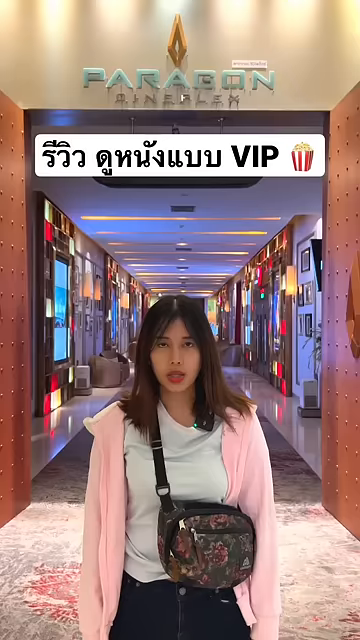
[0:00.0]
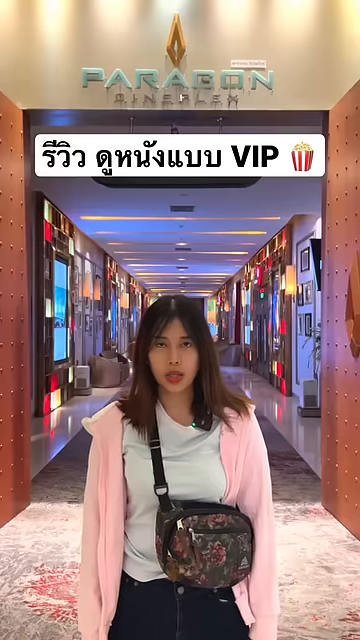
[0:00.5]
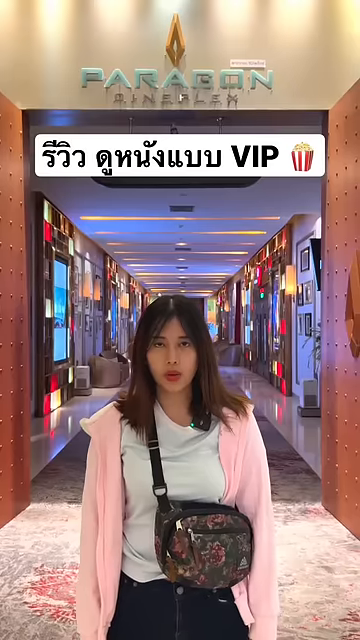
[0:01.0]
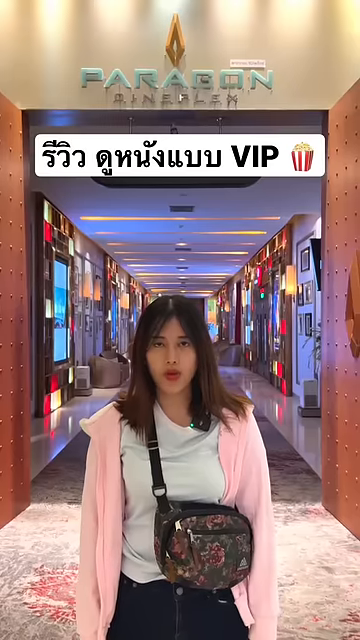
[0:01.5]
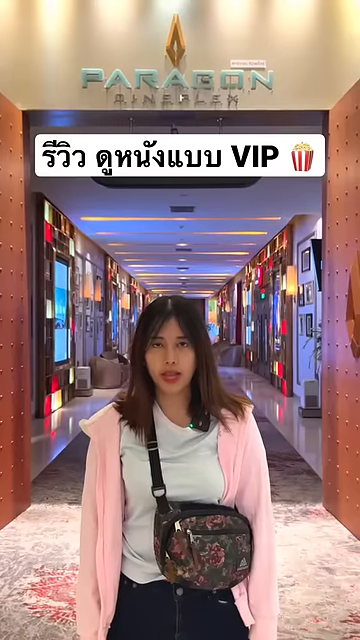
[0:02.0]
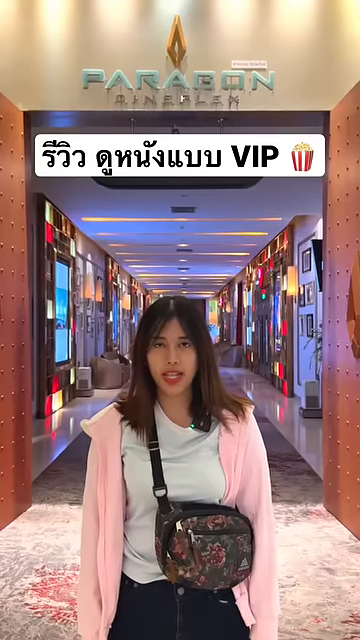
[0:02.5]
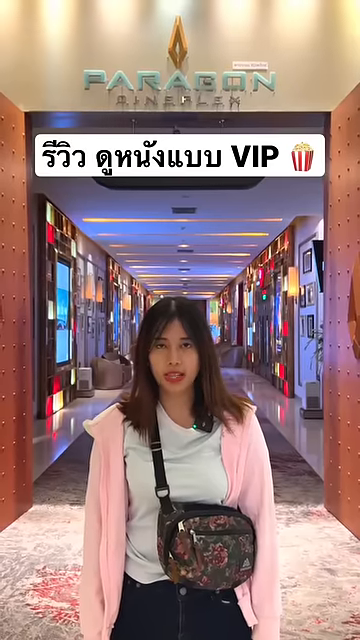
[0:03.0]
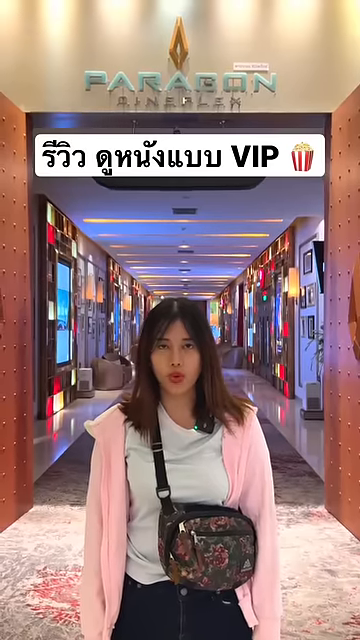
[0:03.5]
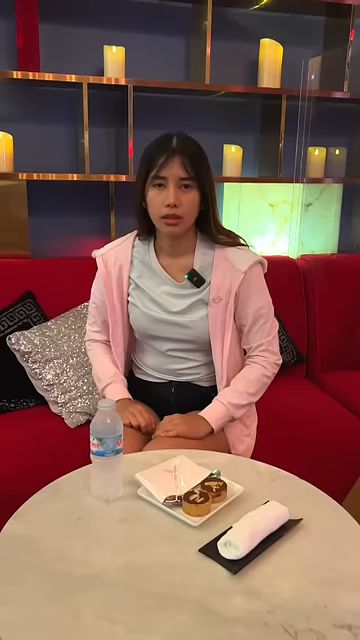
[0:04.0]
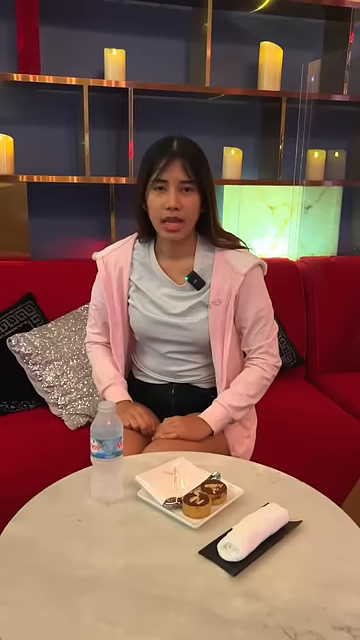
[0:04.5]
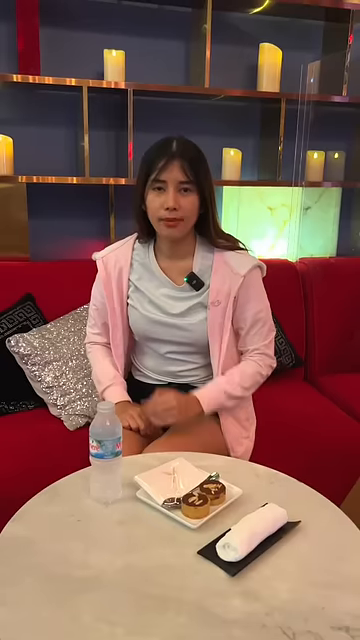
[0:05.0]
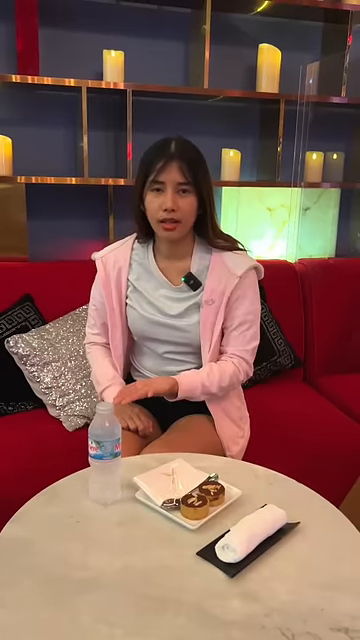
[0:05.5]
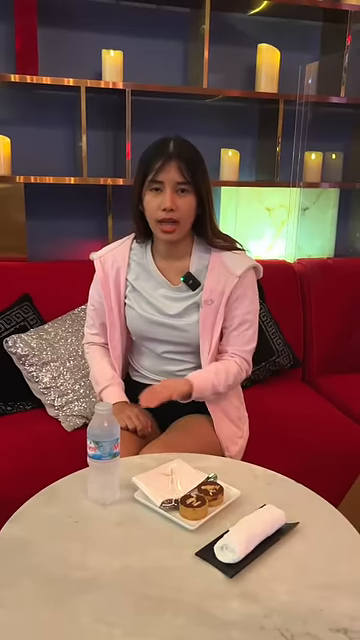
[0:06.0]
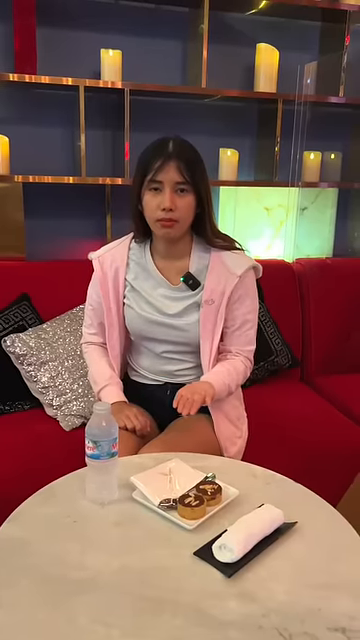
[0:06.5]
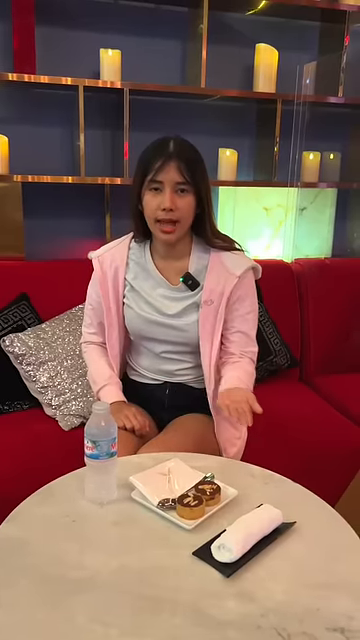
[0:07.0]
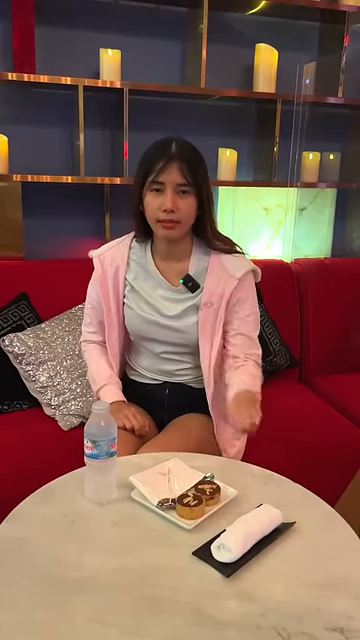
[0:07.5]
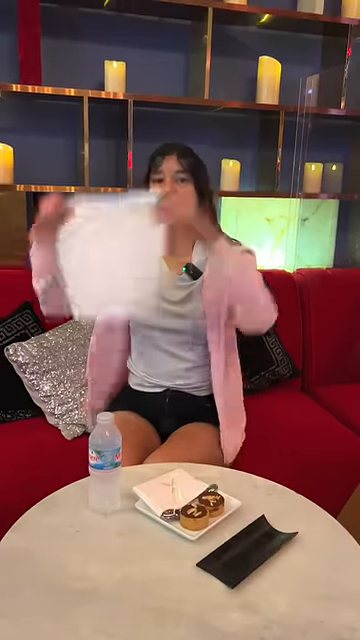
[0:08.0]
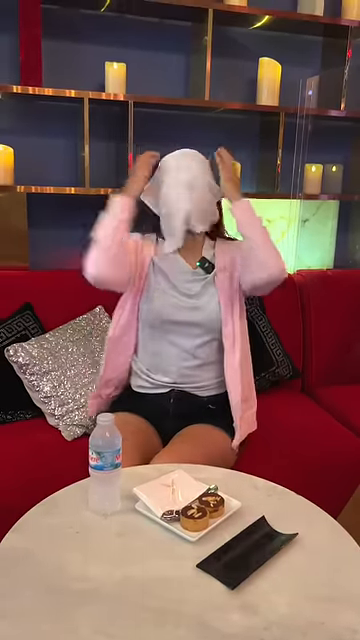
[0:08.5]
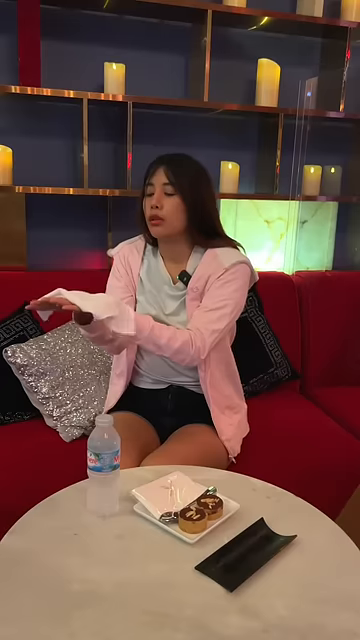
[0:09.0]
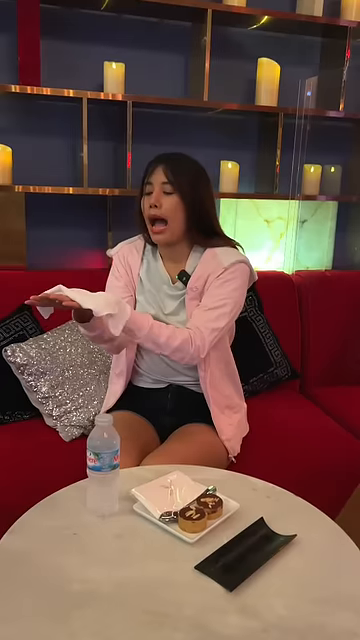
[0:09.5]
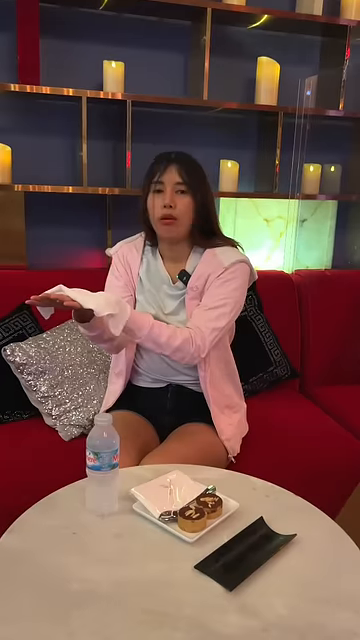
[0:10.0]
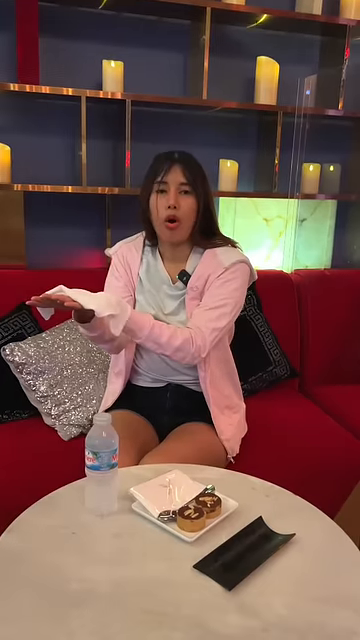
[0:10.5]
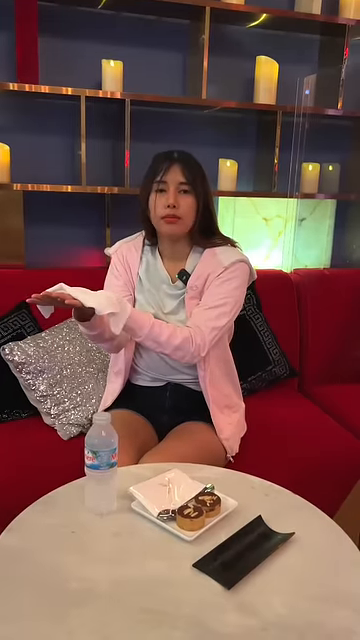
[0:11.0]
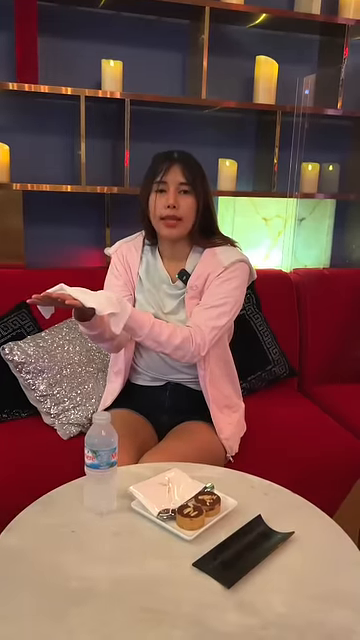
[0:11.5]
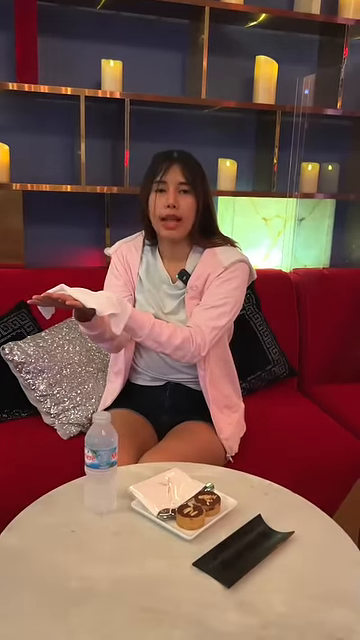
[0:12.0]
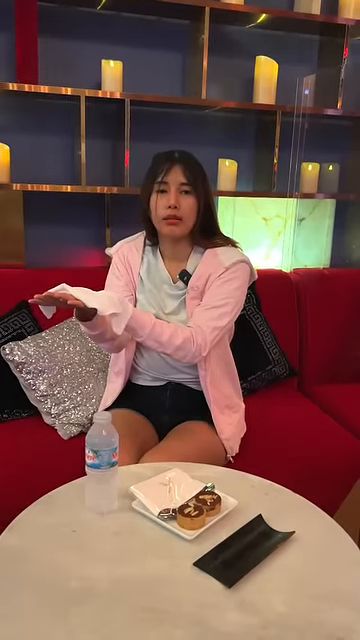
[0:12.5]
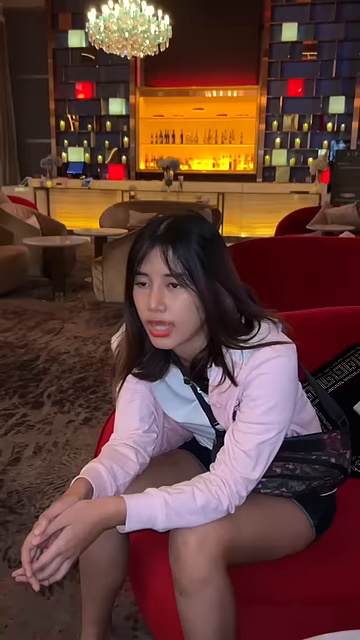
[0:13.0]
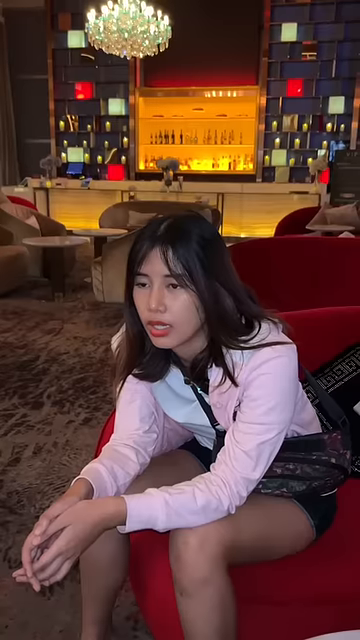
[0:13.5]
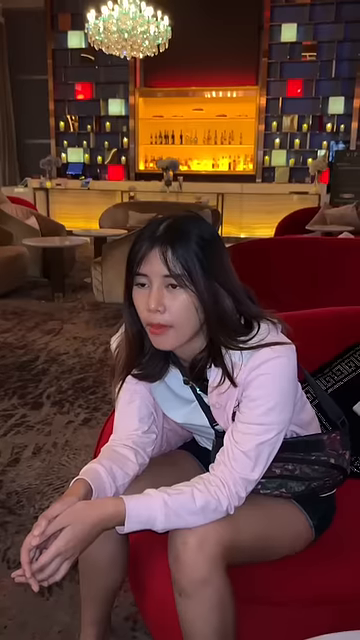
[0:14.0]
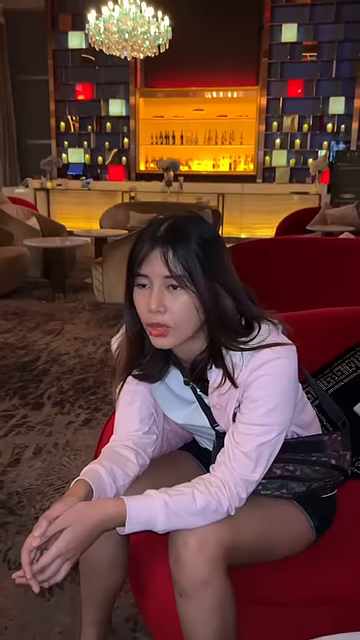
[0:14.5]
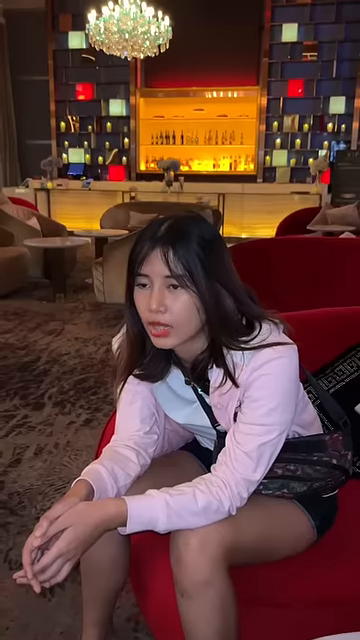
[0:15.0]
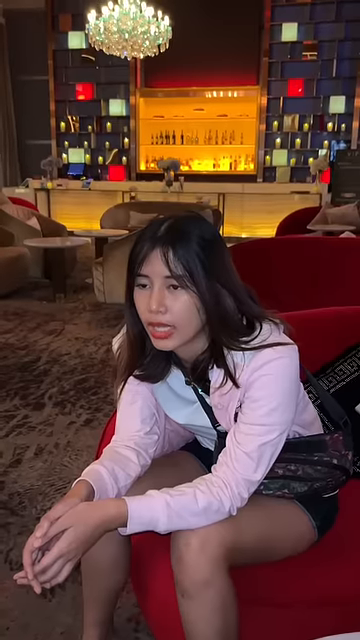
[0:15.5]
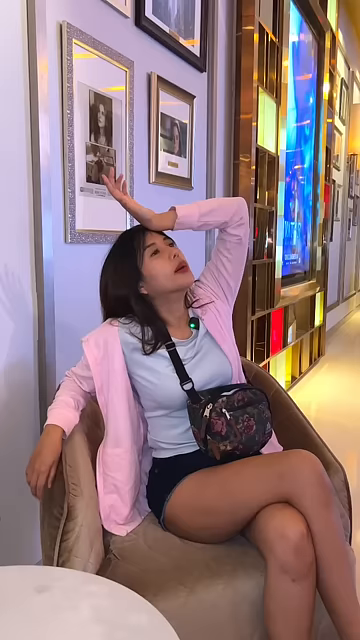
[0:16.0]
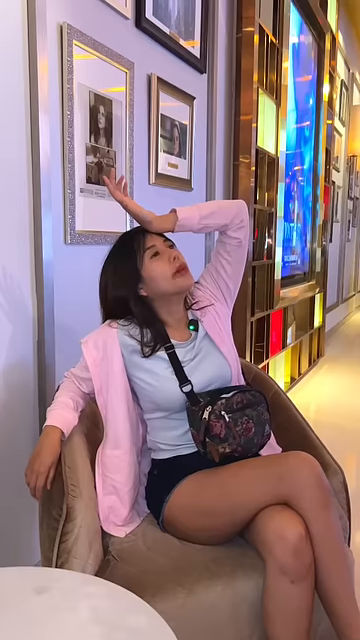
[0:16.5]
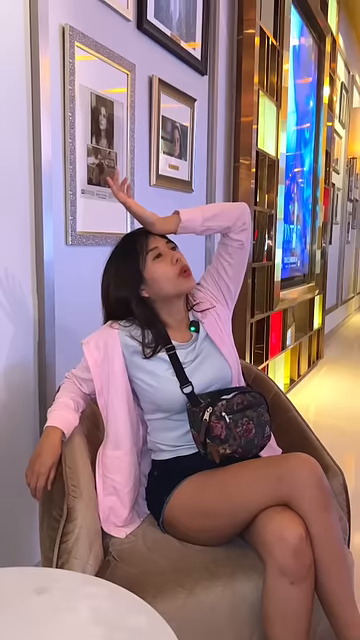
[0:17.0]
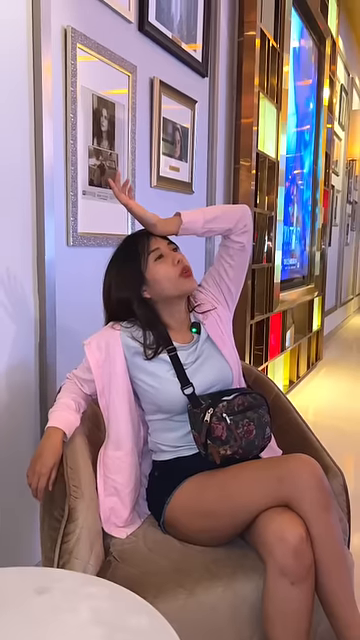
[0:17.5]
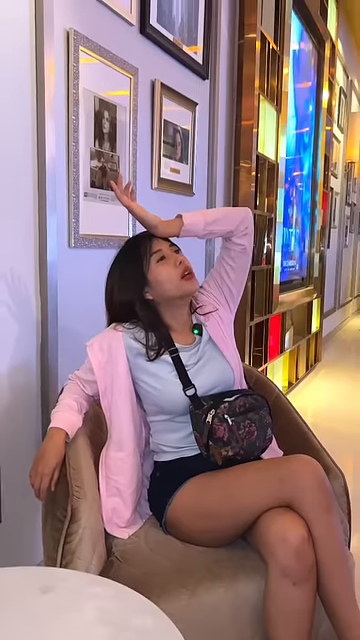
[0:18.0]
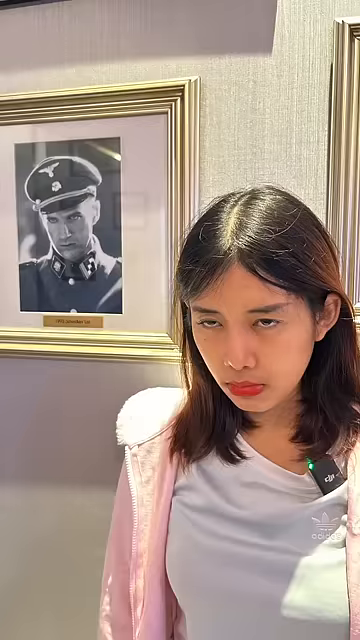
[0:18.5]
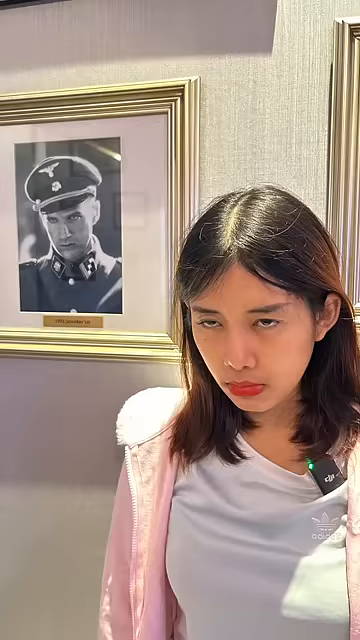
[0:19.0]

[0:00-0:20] The video is set at VIP cinema Bangkok. A woman and others are sitting in what appears to be a theater. She wears a pink zip-up sweatshirt with a unicorn hood. The room has brown carpet and plush chairs in different colors, which seem to be mostly red, along with circle tables for snacks and food. She puts a cold towel on her face to refresh herself. She seems a little bored and rolls her eyes, then takes a picture by one of the pieces of art. In the background there are candles, a purple wall, and a chandelier. What look like windows are apparently just candles seen from a distance, resembling windows onto the dark outside.